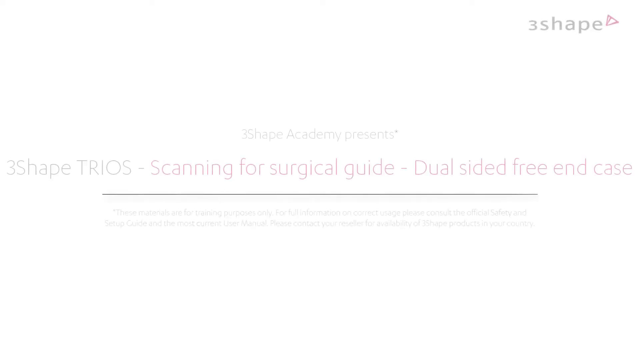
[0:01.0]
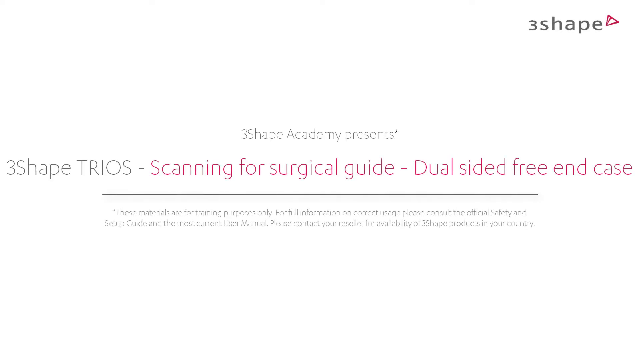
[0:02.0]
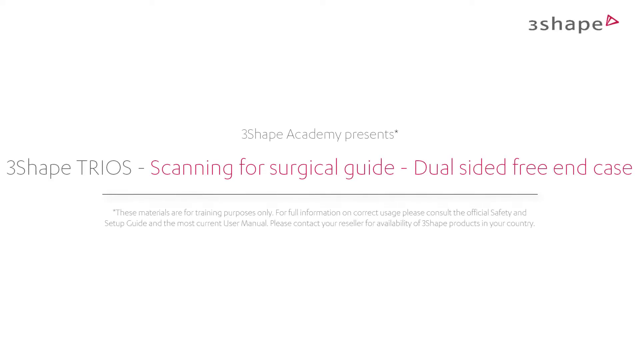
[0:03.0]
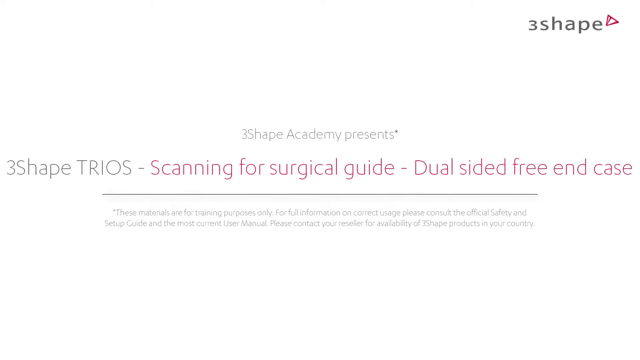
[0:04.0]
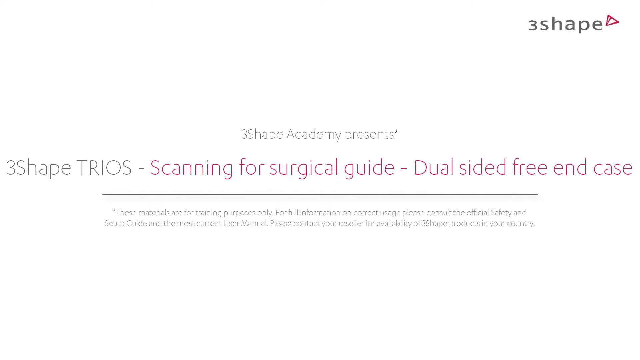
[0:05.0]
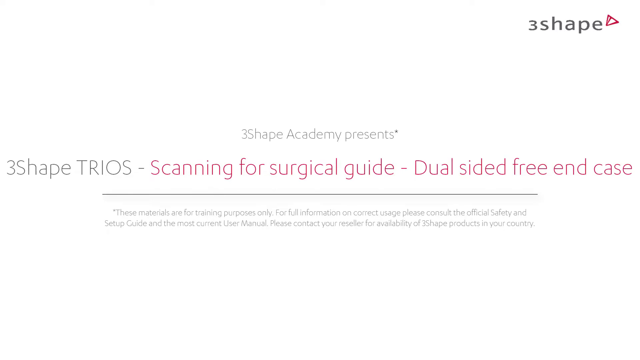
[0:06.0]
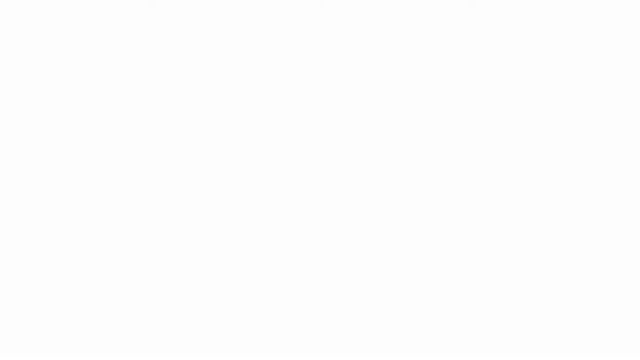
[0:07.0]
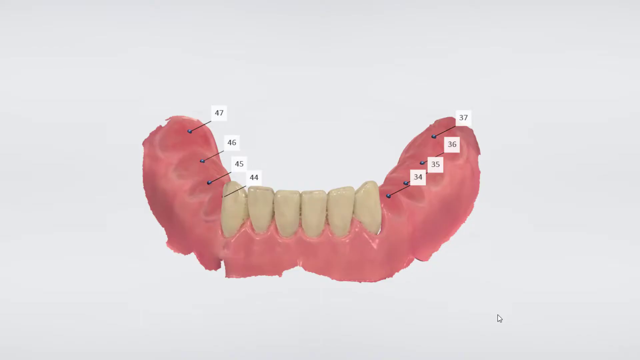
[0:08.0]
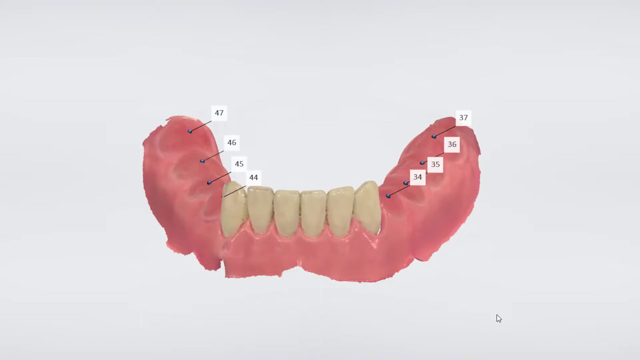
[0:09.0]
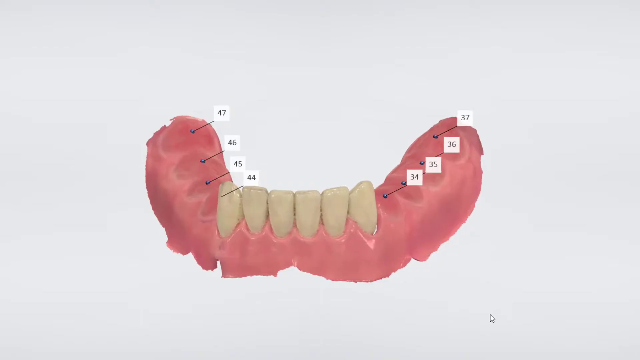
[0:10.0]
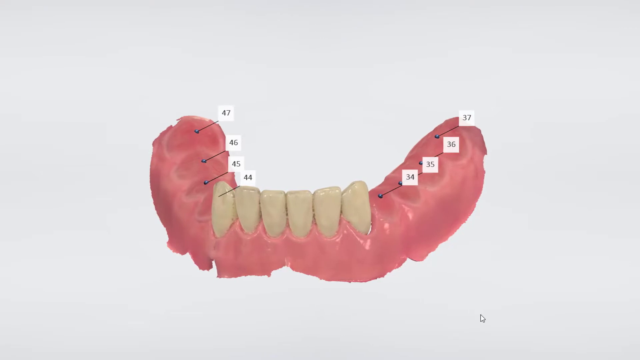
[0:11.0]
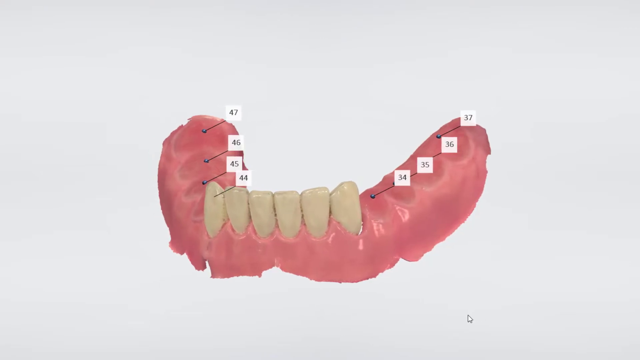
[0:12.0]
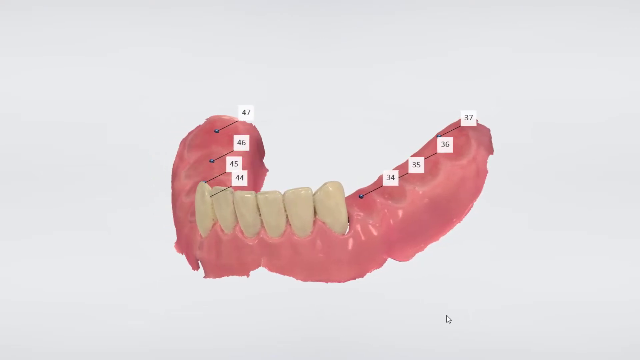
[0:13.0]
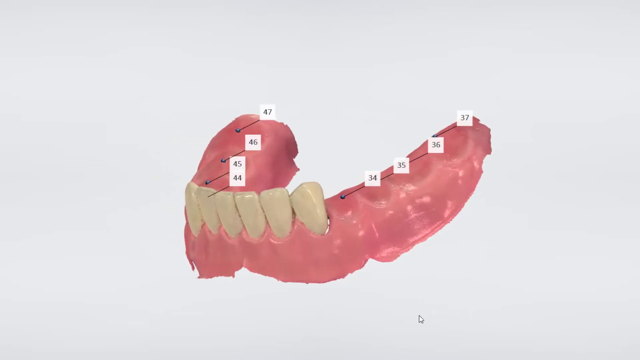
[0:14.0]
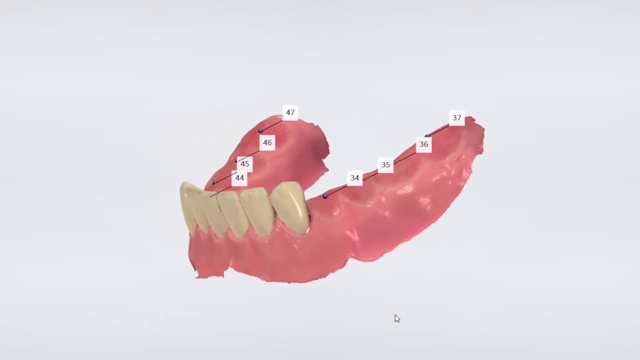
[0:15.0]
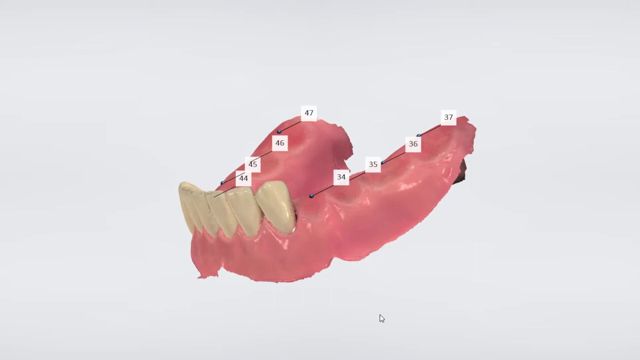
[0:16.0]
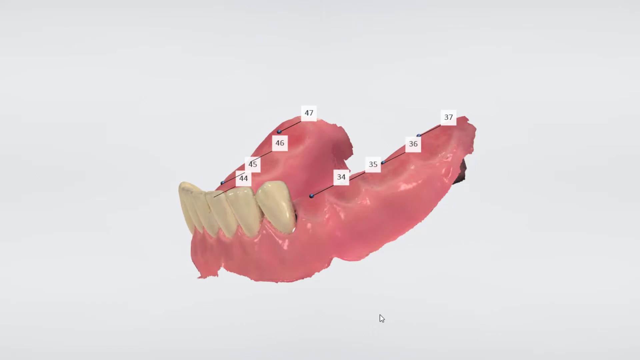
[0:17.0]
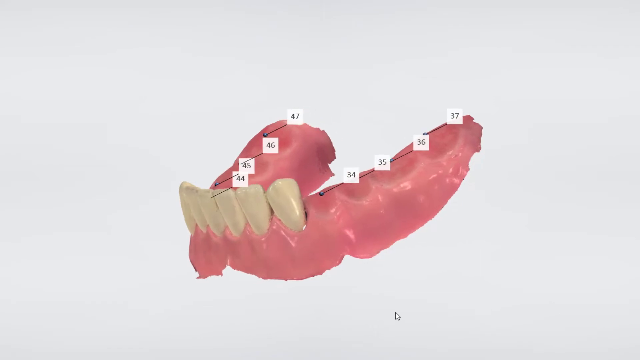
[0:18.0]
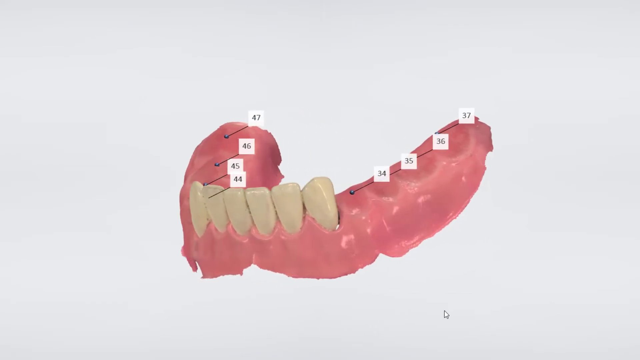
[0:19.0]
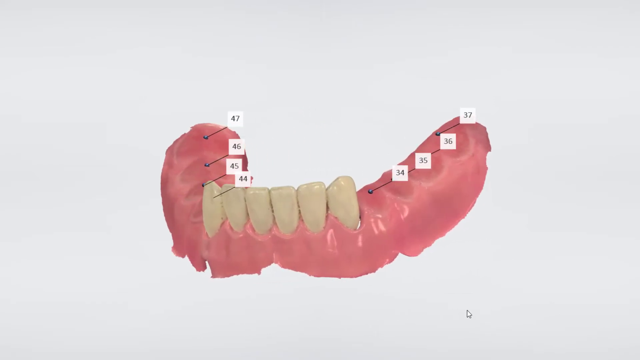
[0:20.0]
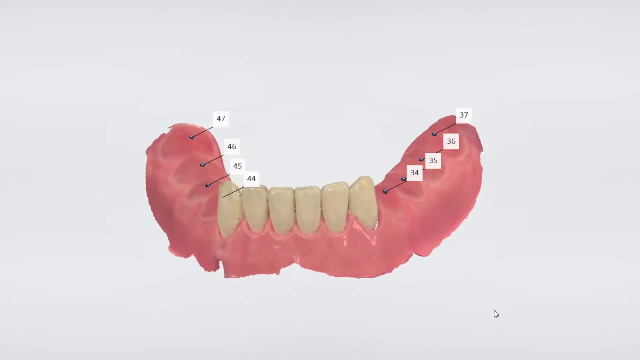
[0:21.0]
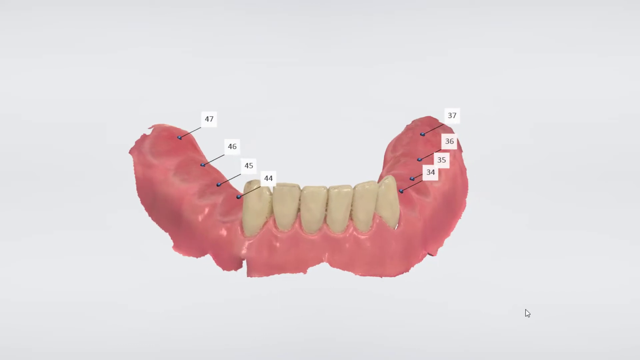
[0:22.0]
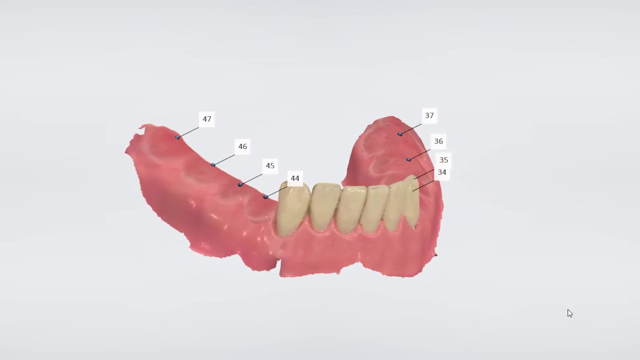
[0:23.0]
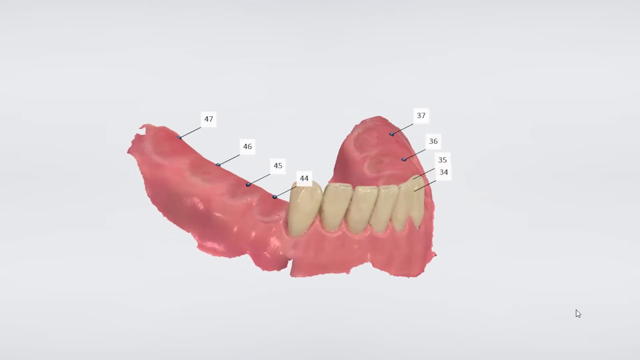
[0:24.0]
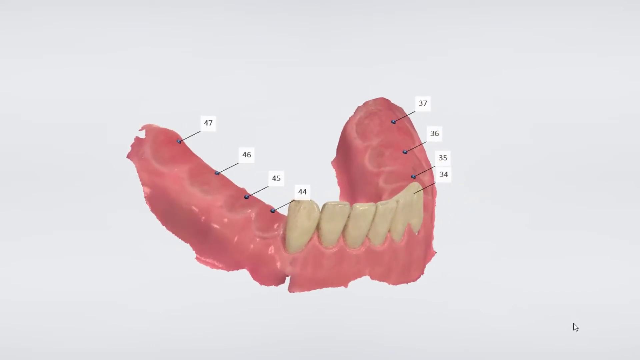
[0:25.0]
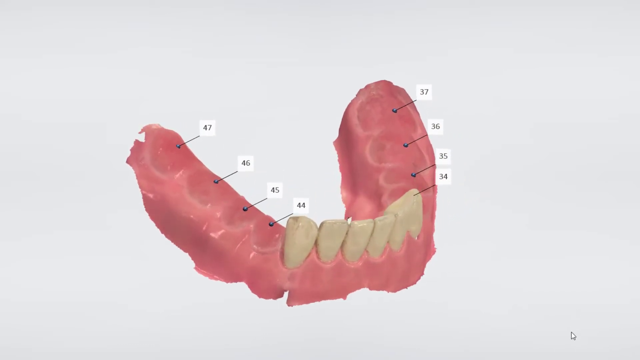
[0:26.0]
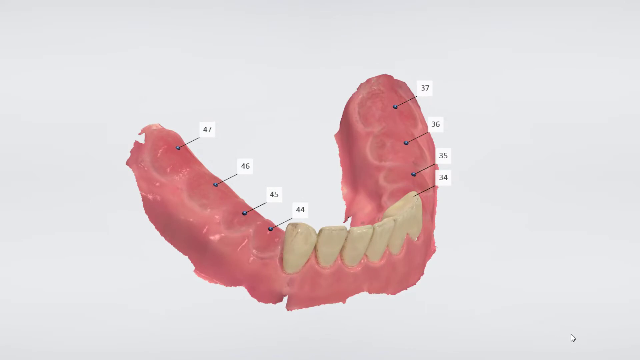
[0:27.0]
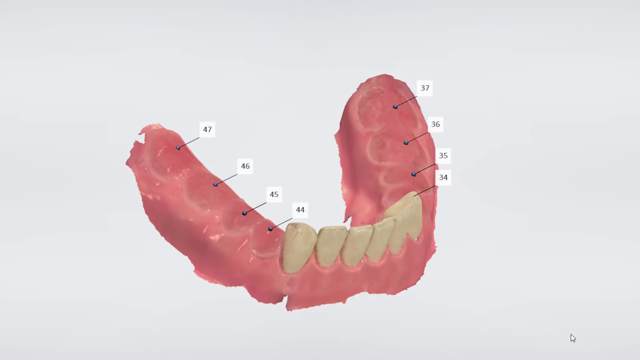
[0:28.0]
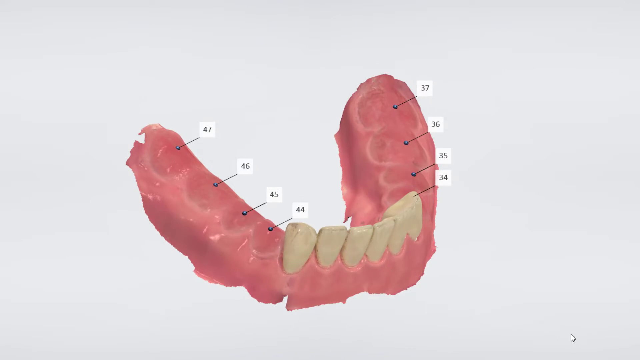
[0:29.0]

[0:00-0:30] The screen begins completely blank with a white background before a black line appears in the centre. The text "Free Shape Academy Presents" appears in the top third of the image, with larger red text below reading "Free Shape Trios, Scanning for Surgical Guide, Dual-Sided Free End Case". Underneath is the line, with text below it that is not very clear. In the top right of the image is the Free Shape logo with a small red triangle. The screen stays on this image for about five seconds before switching to an image of teeth from a bottom jaw: six teeth in the middle, with spaces for the other teeth behind them. The gum is visible below, and from each space where a tooth should go a small thin line leads to a small white box with a number on it. On the left side of the gums are the numbers 44, 45, 46 and 47; on the right side are 34, 35, 36 and 37. A small computer mouse arrow at the bottom rotates the gum and teeth to show a sideways view of the right side of the gum. The mouse then moves to the right, bringing the left side of the gum into focus, and then drags down, changing the angle so the teeth and gums are seen from a bird's-eye view.